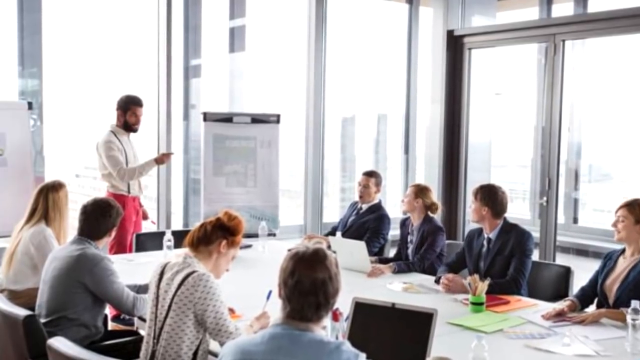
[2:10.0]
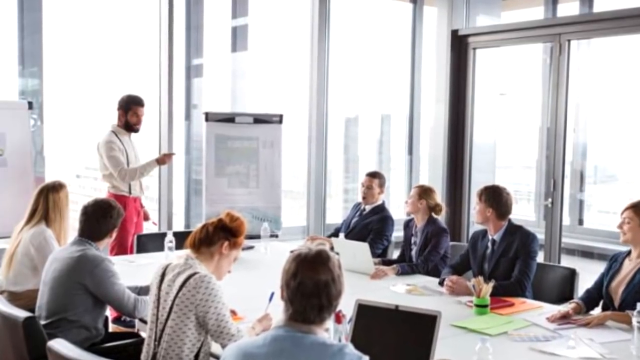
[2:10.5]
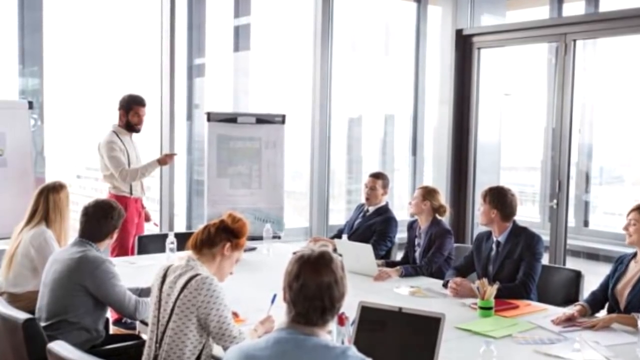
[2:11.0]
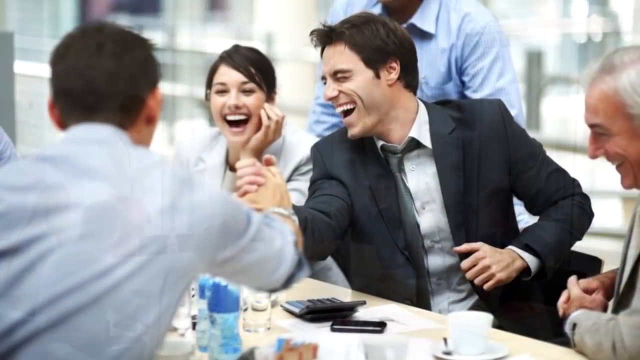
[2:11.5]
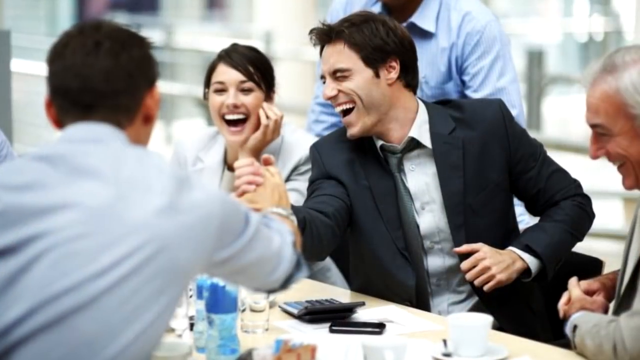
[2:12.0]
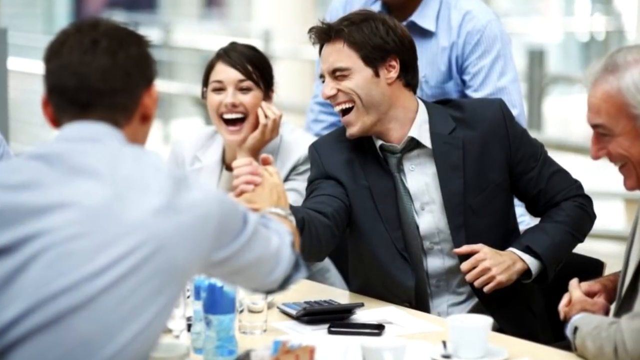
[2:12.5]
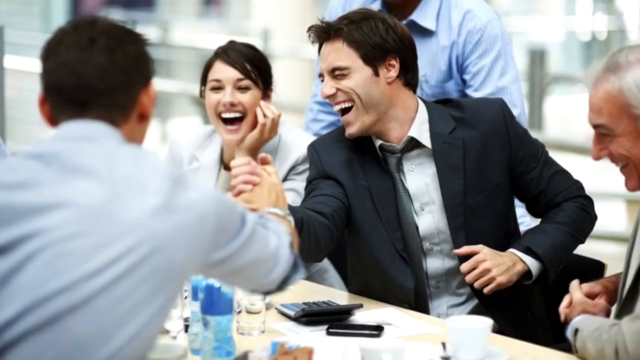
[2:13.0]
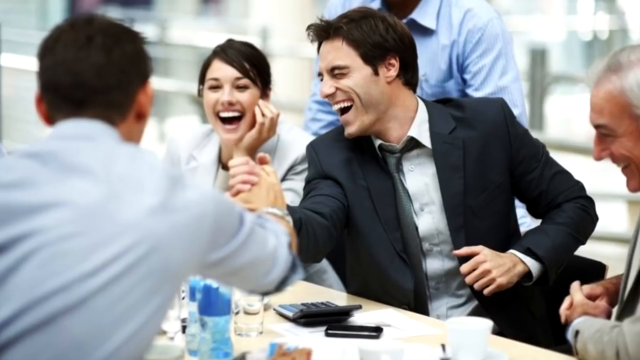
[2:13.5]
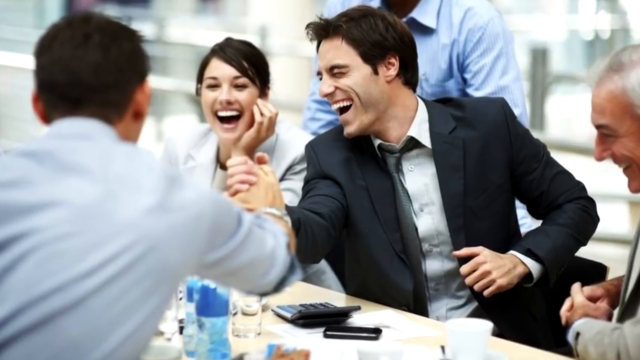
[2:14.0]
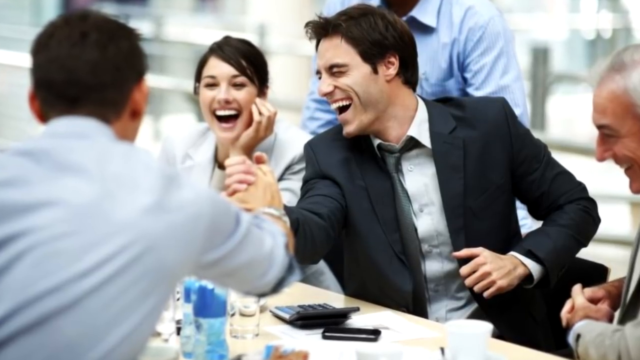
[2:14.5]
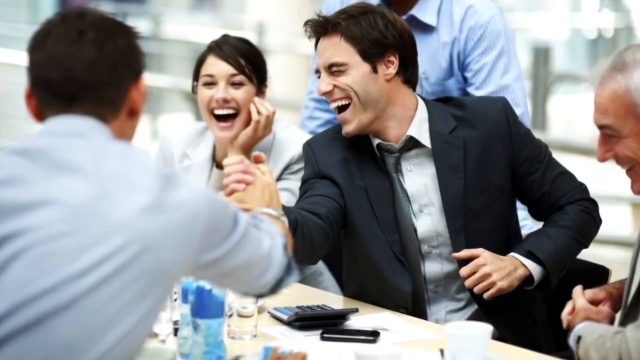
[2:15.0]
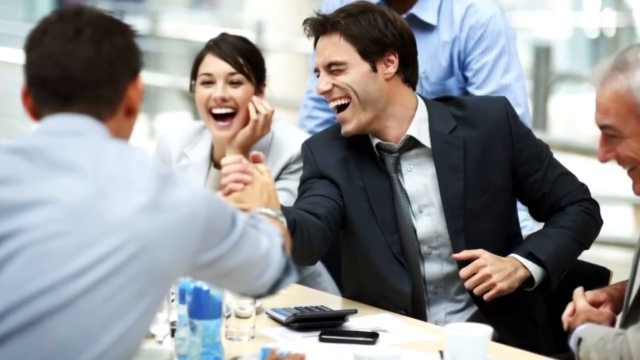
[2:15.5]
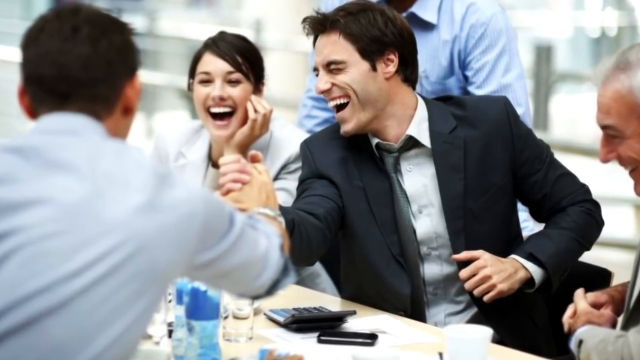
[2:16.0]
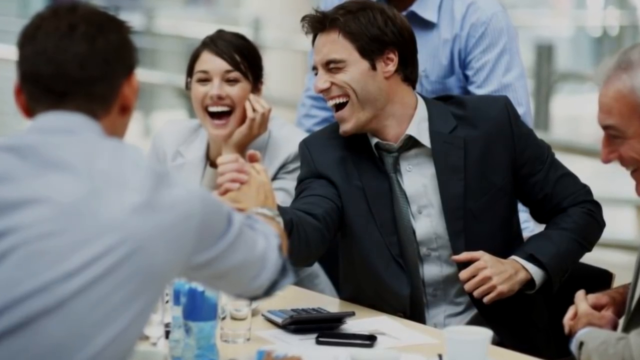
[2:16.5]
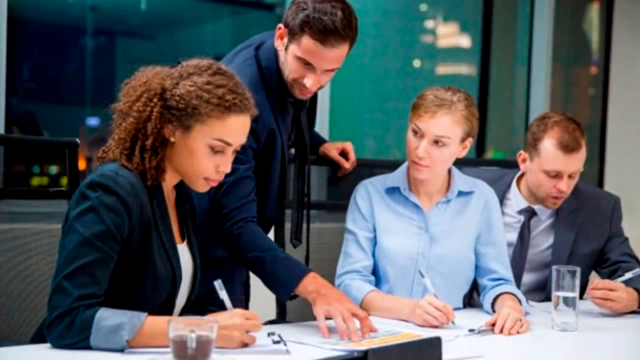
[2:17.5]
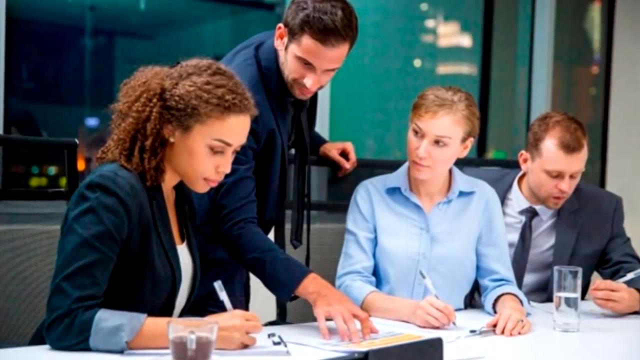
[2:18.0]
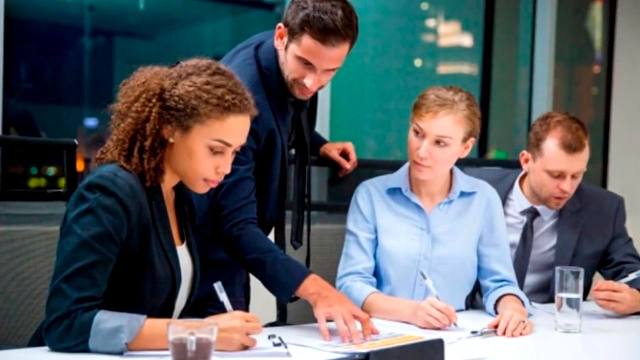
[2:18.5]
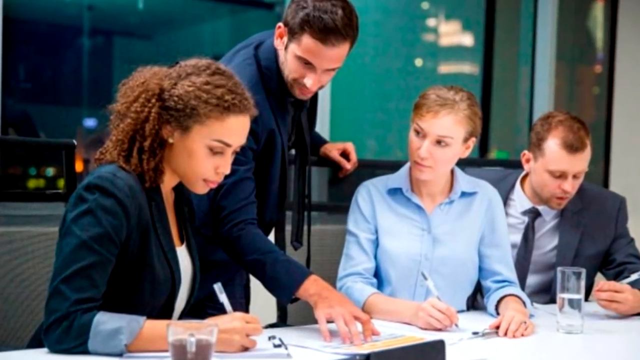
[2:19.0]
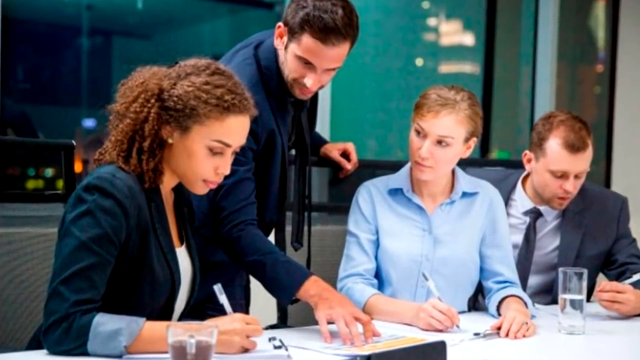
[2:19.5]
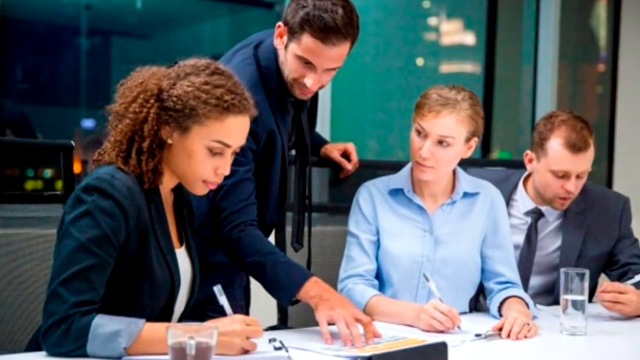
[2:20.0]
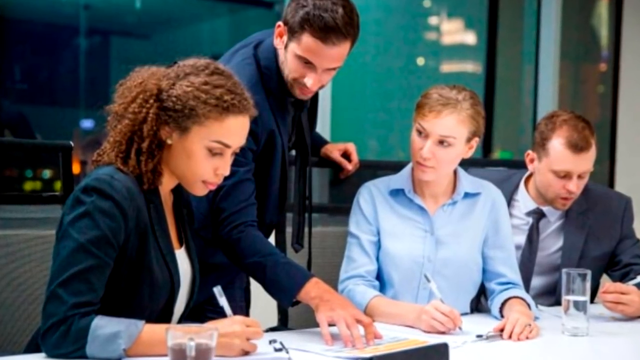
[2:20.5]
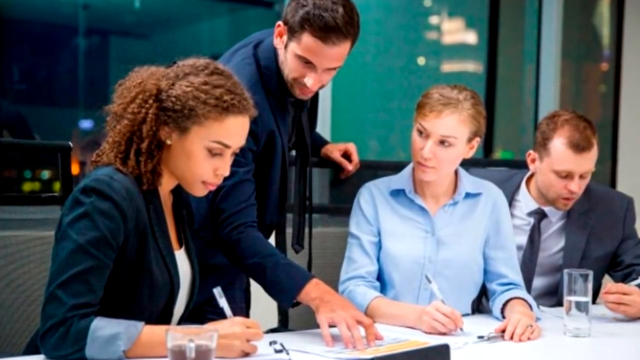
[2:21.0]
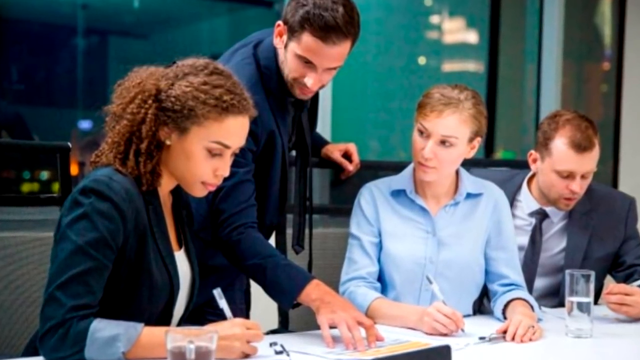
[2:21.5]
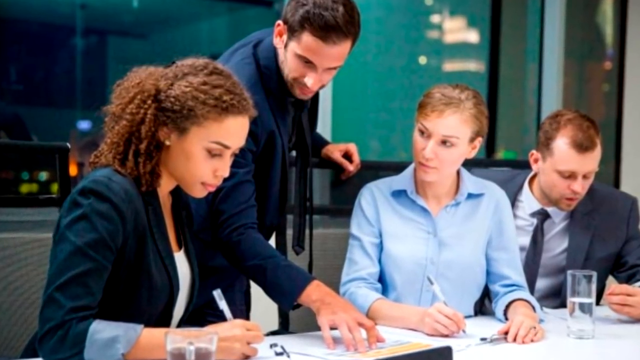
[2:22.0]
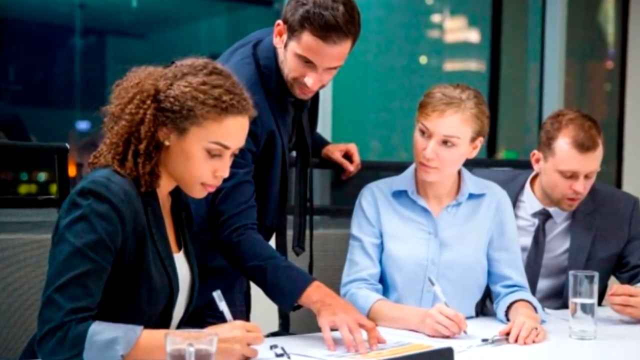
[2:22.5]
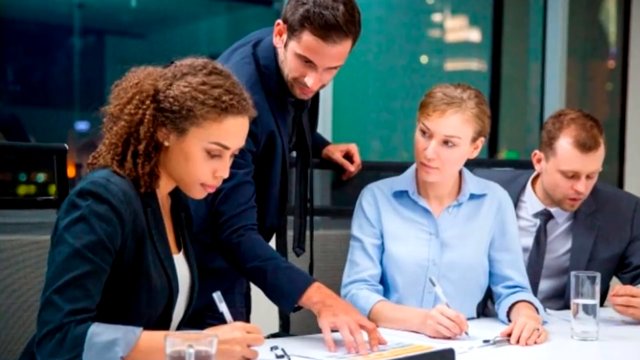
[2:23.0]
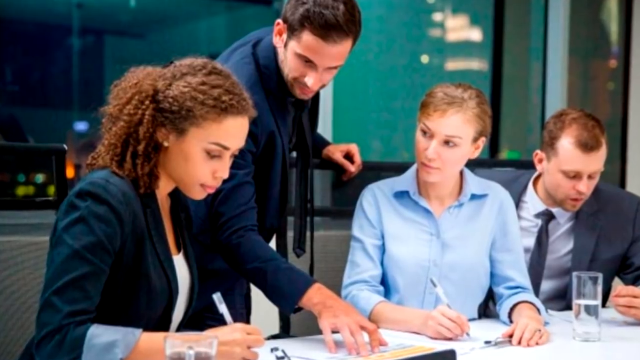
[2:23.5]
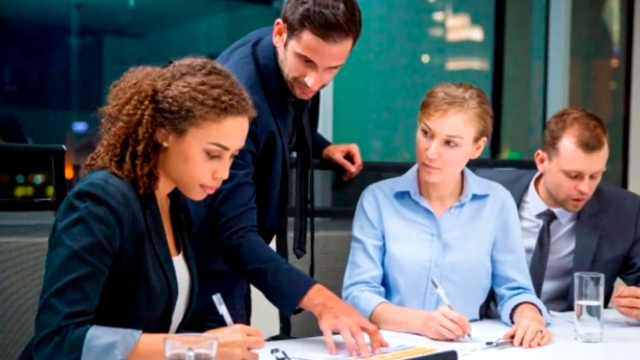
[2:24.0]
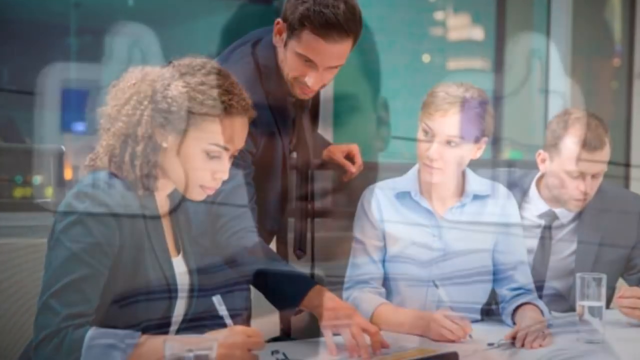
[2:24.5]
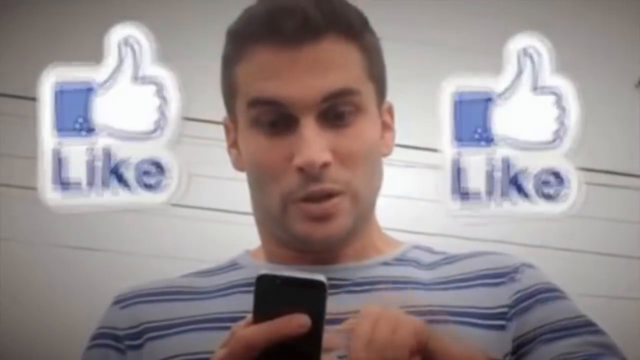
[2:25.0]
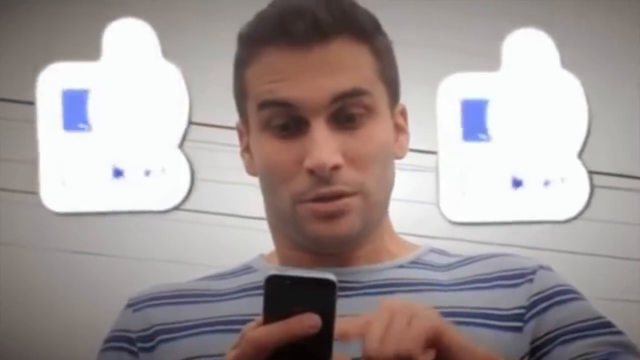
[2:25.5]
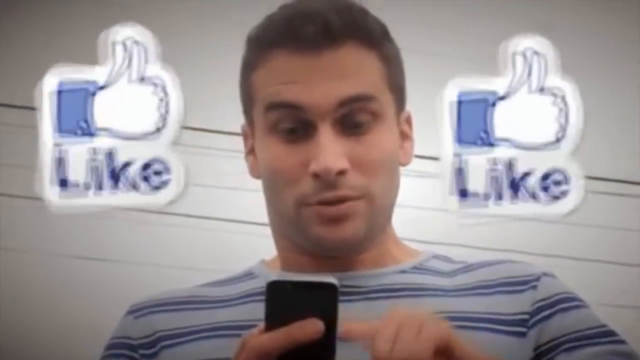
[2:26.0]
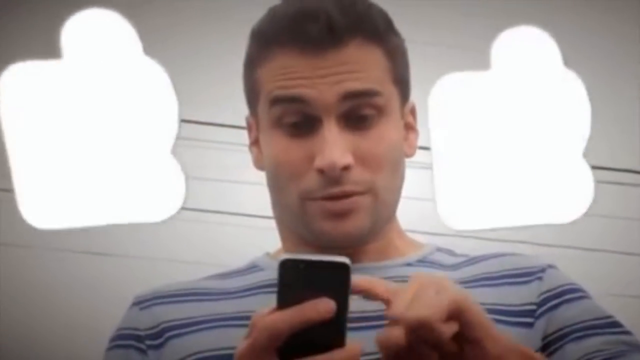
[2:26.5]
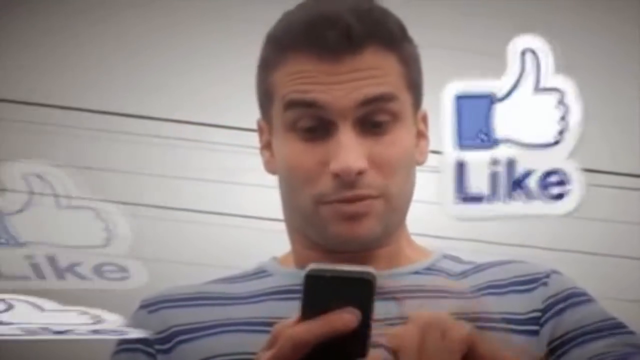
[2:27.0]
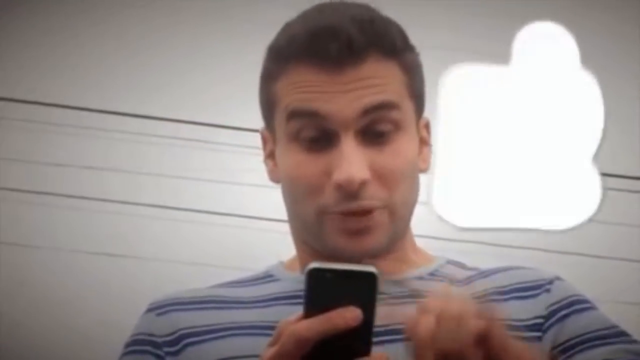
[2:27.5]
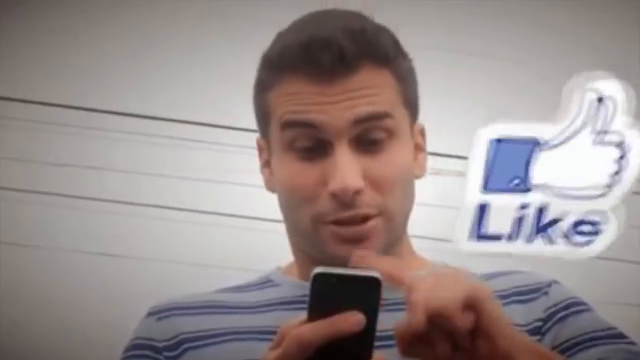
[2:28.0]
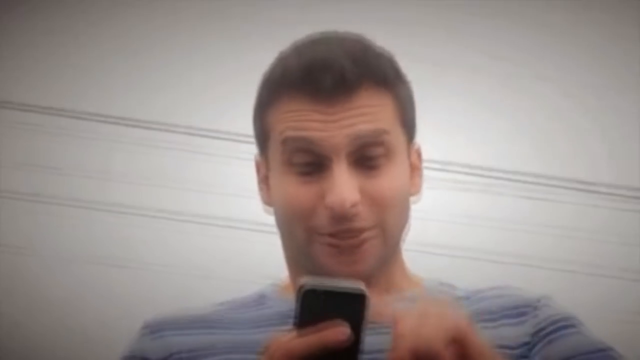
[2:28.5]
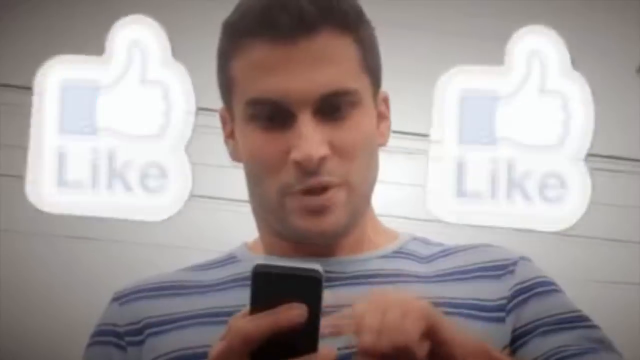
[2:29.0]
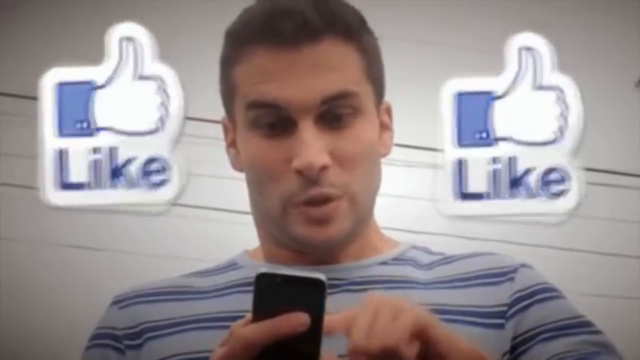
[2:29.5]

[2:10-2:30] The room is pretty much all windows. A large white table has at least four people on every side of it. Some of the people have laptops and some have paper, but they are all looking at the presenter, who stands next to an easel with a graph or a blueprint on it. The next scene appears happier: two men are kind of clasping hands and laughing, a woman looks at them laughing, and another older man next to them is also laughing. They are all dressed business smart. In another office scene, three people sit at a table, and between the two women a man leans over the African-American woman, pointing at something on the table. The two women and the man who are sitting each have a pen in their hand and are writing. All are dressed business smart. Then a man is shown tapping hard on his phone, and two buttons are kind of pulsating on the screen.